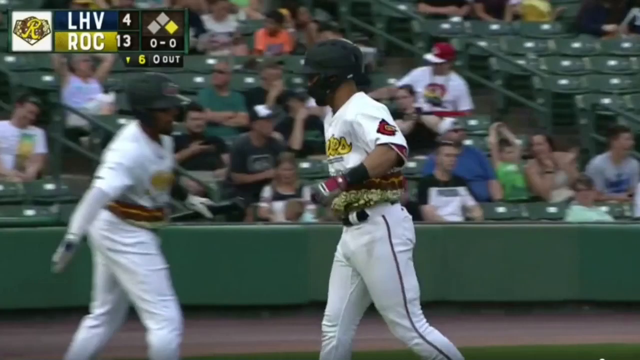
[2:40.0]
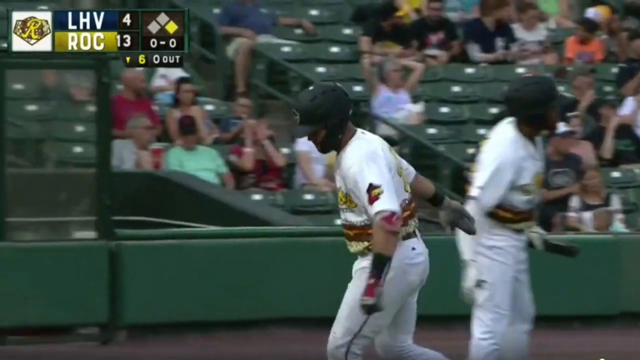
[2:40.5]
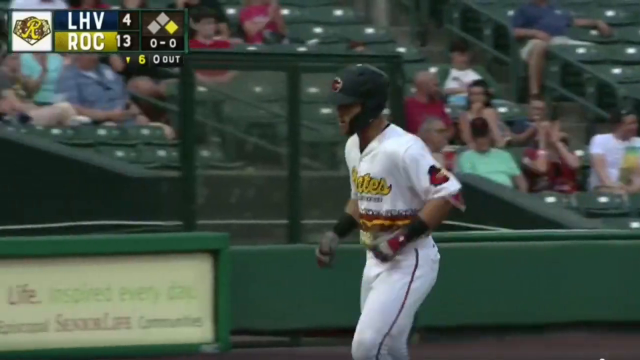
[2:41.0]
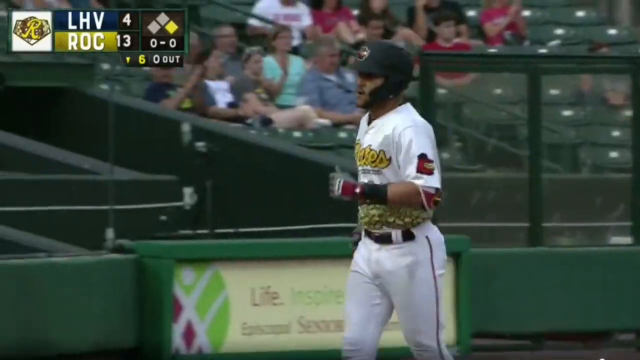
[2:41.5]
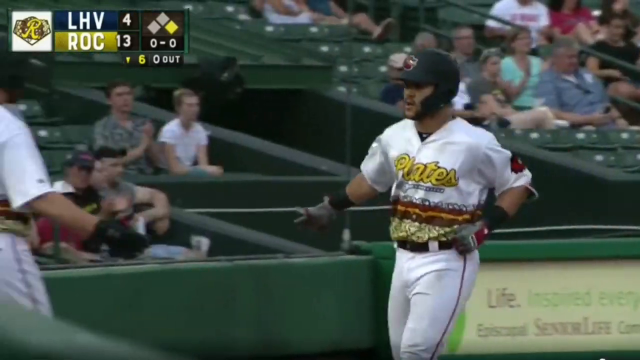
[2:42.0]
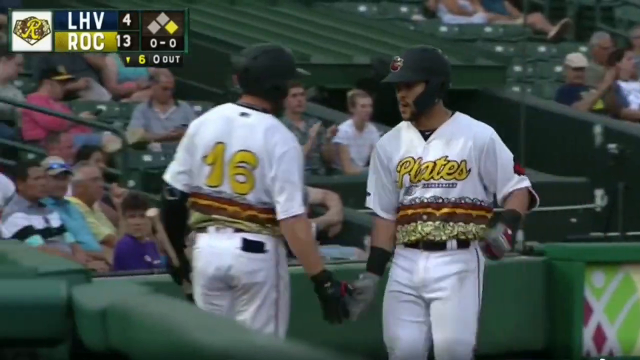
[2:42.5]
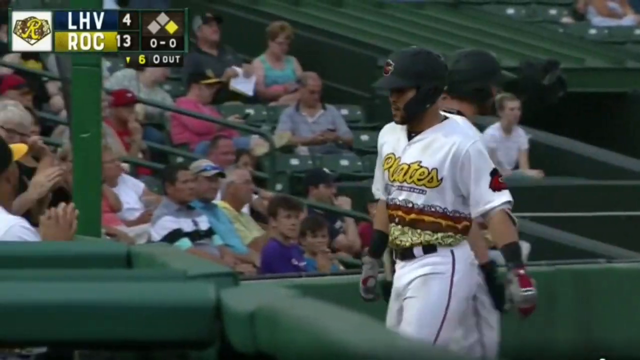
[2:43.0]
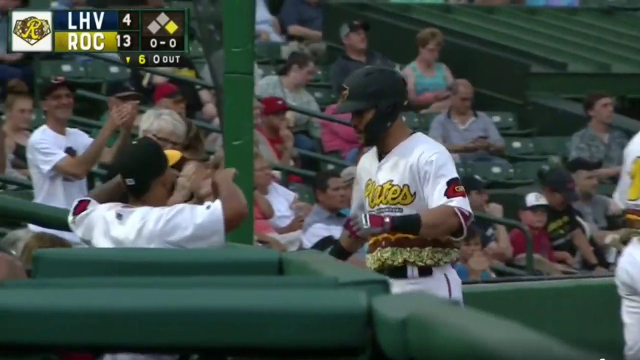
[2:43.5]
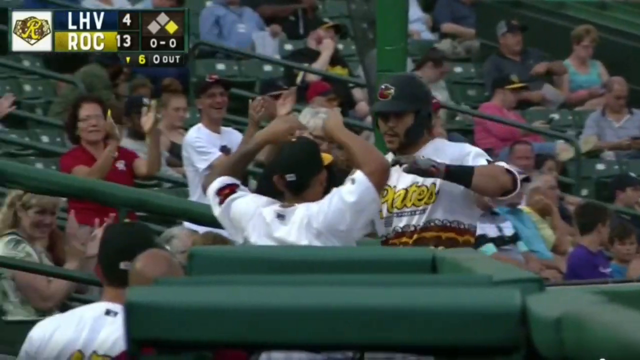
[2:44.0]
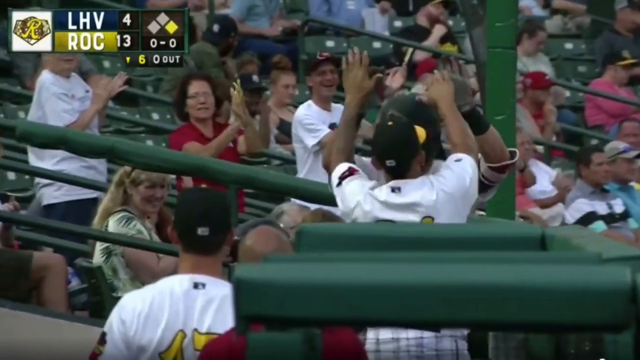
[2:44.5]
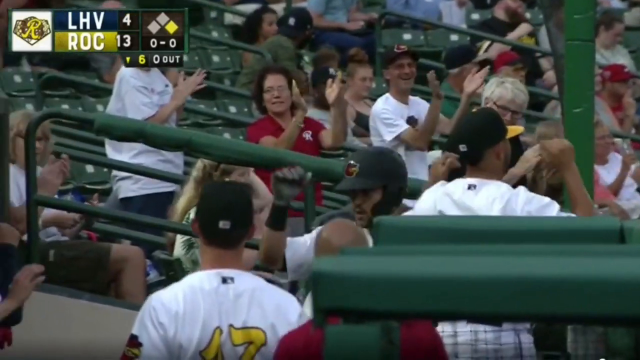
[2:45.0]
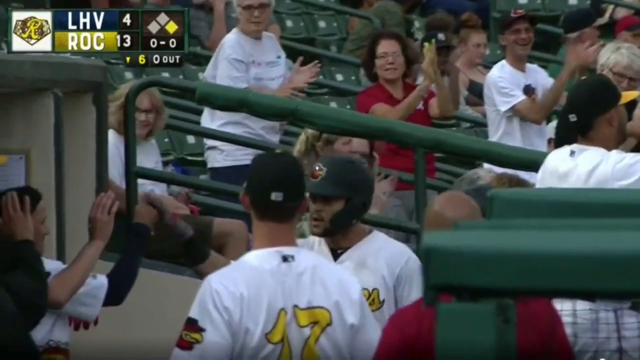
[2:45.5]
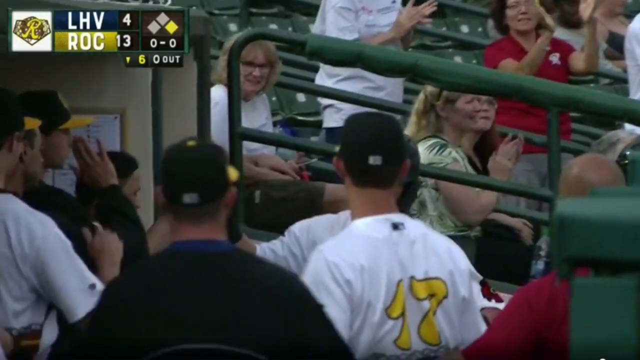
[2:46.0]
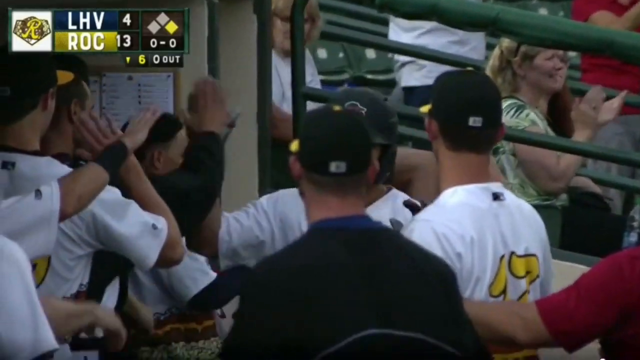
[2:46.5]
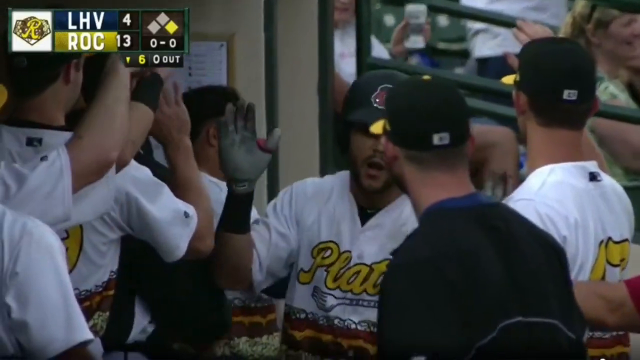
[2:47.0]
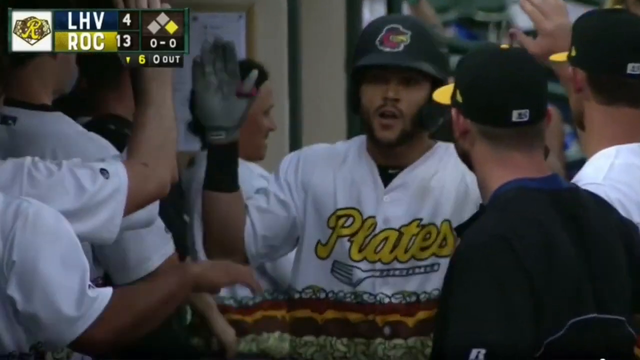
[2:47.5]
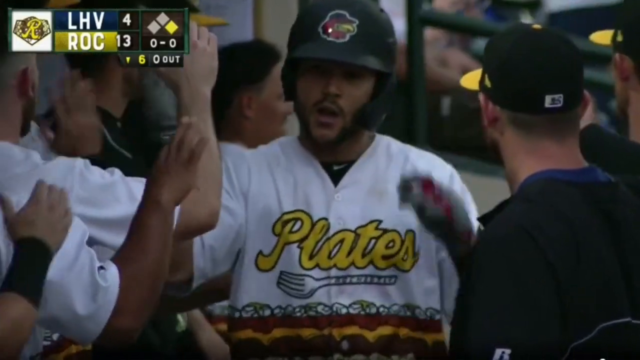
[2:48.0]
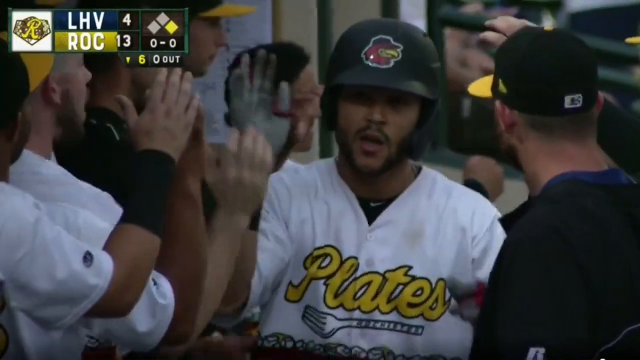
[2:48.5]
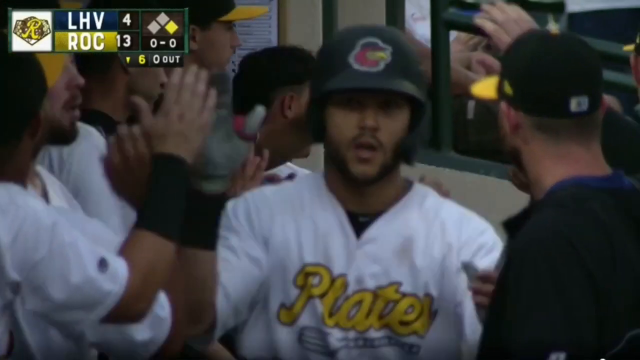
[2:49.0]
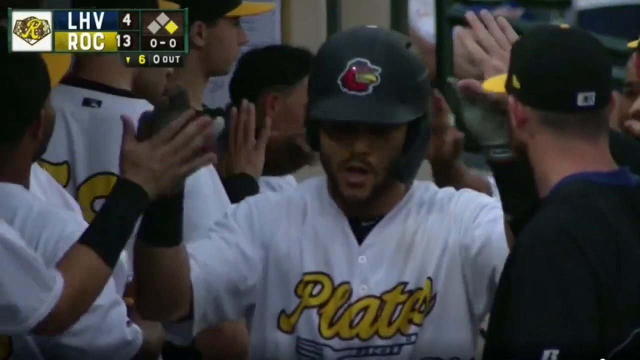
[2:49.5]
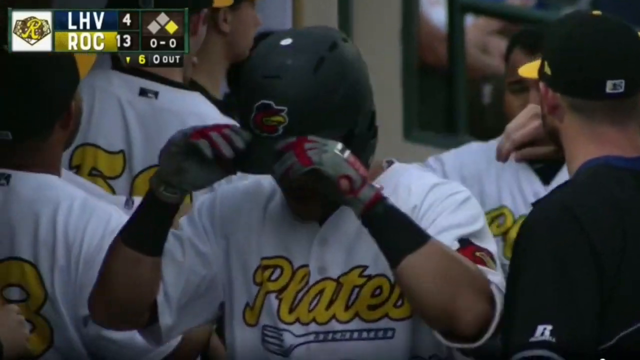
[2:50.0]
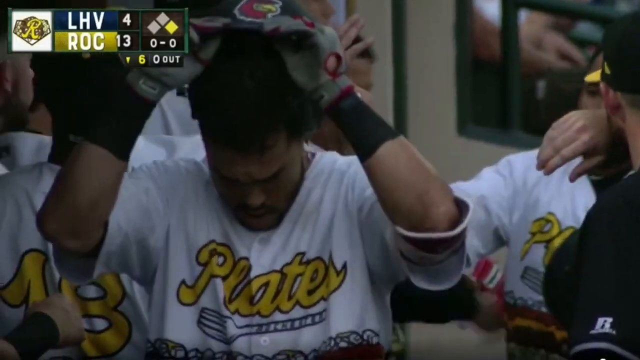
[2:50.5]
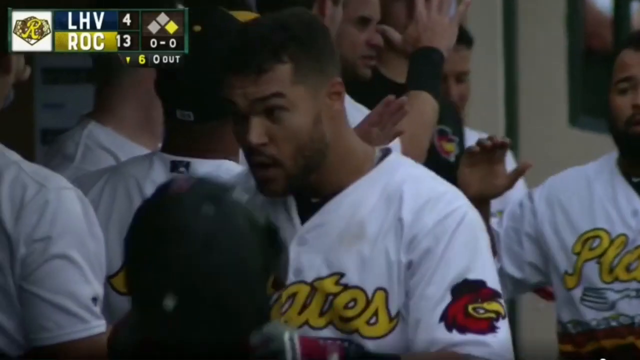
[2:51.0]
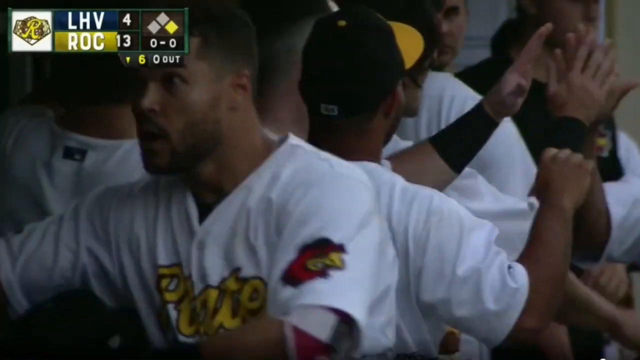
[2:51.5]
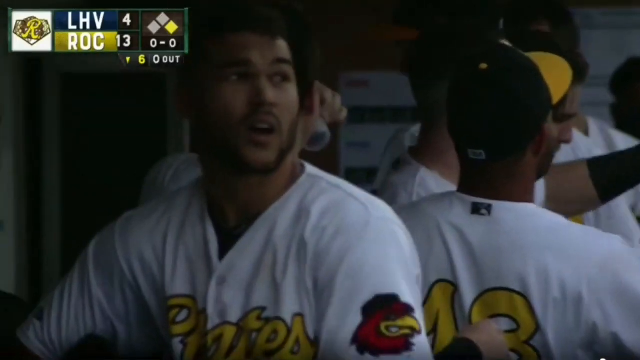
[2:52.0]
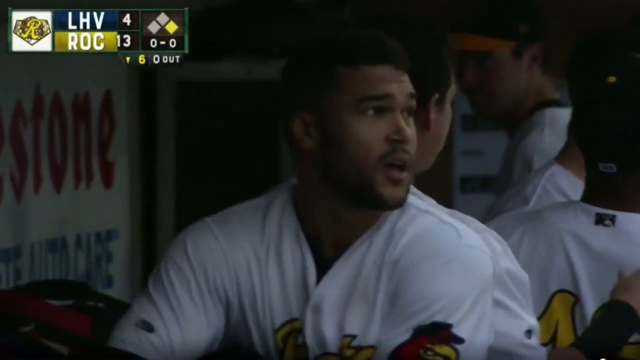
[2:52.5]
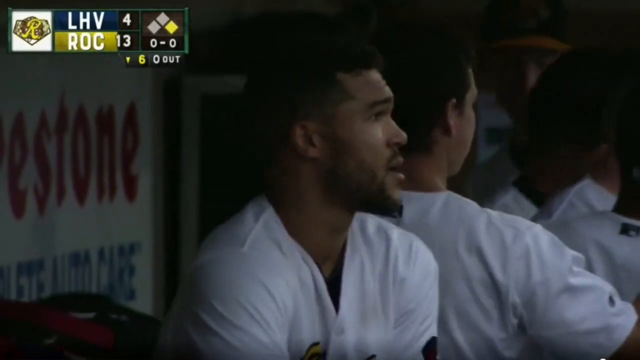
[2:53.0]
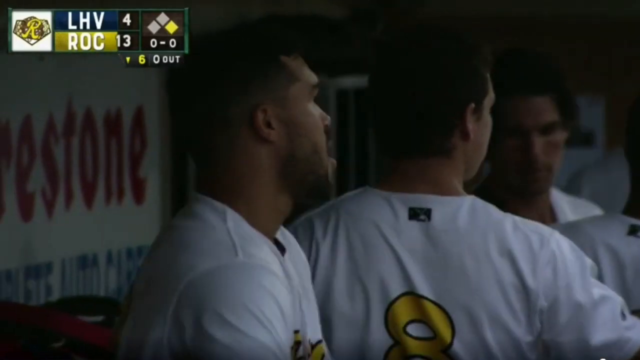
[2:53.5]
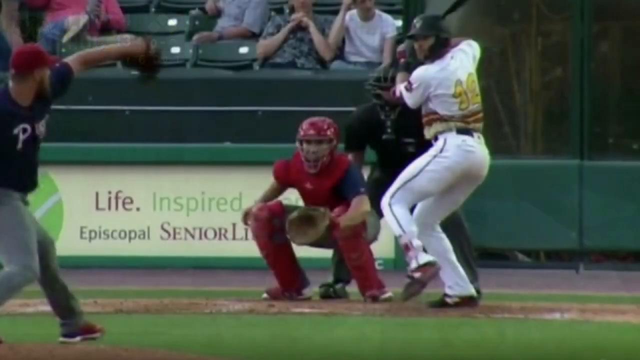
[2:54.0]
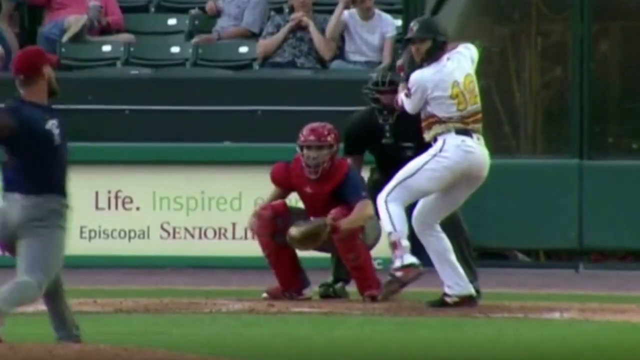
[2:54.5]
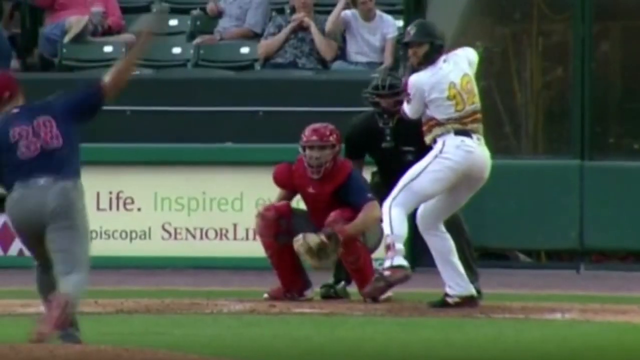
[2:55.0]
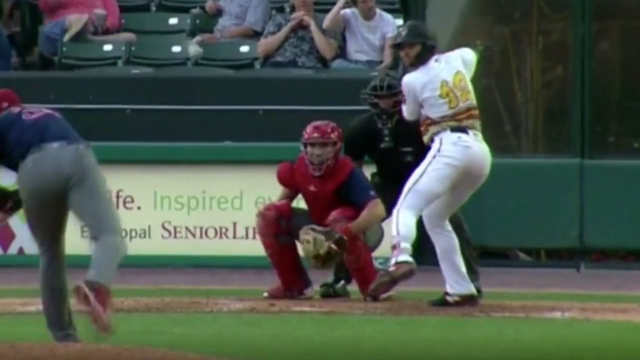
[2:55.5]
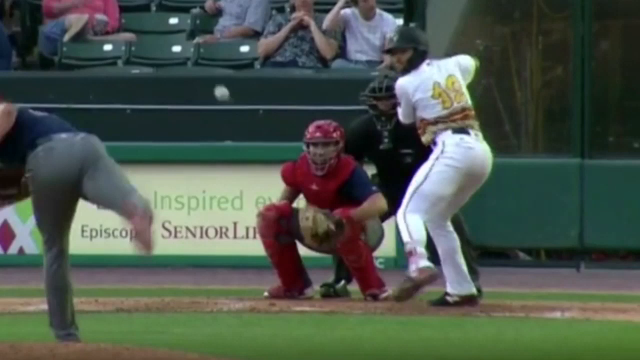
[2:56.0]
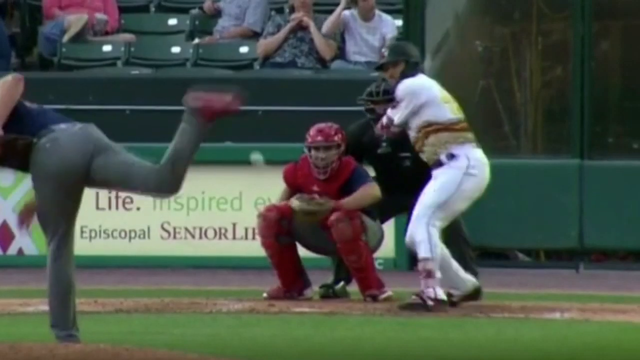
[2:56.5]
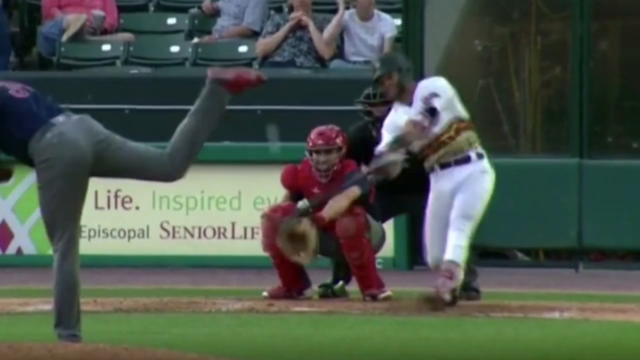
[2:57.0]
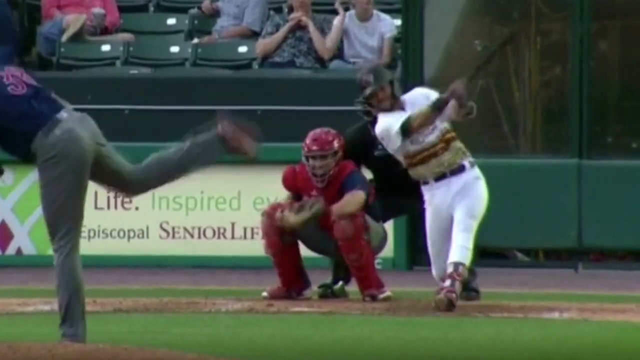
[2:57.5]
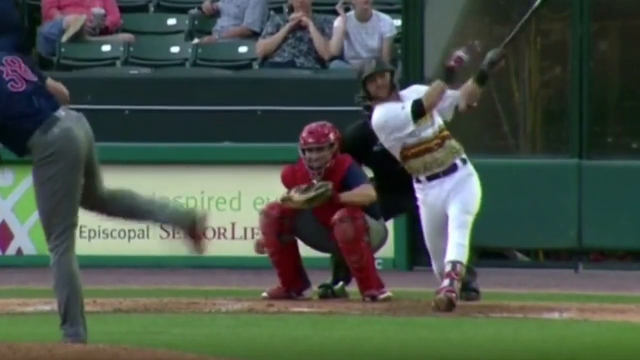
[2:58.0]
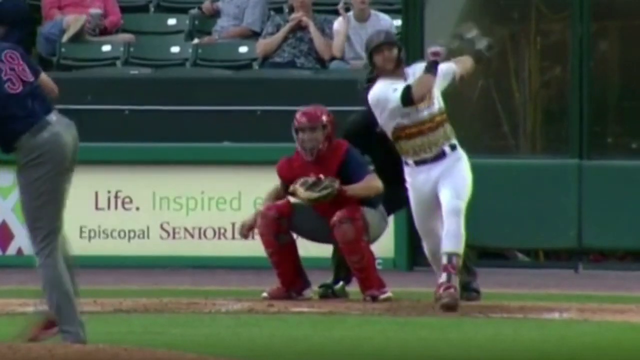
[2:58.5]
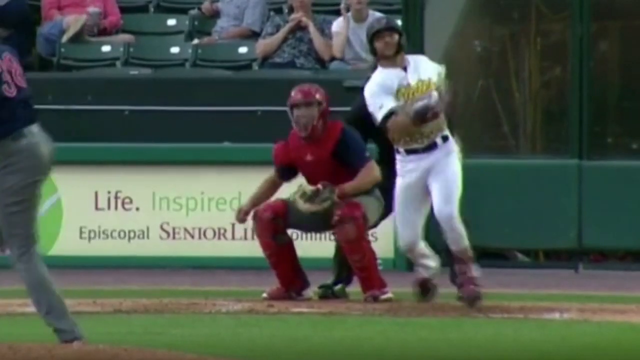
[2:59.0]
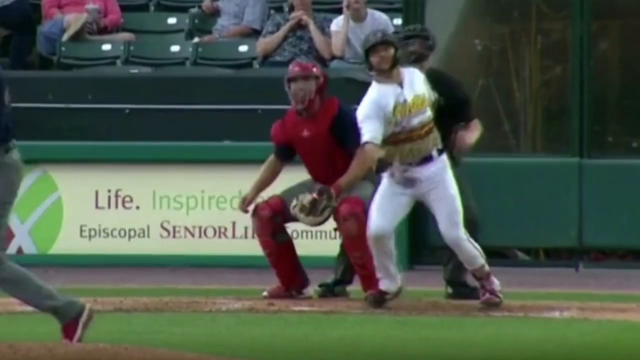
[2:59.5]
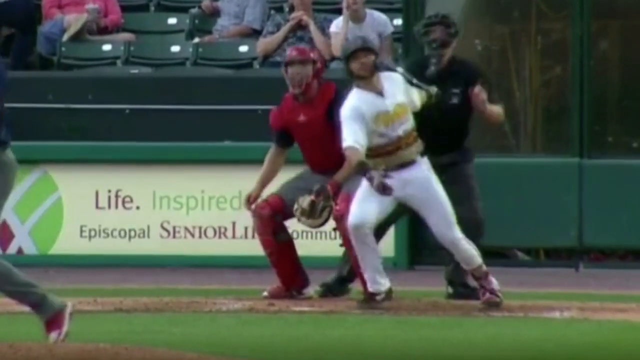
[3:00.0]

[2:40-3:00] Baseball players compete, trying to hit the ball far out of the park, and a number of labels are visible in the background.